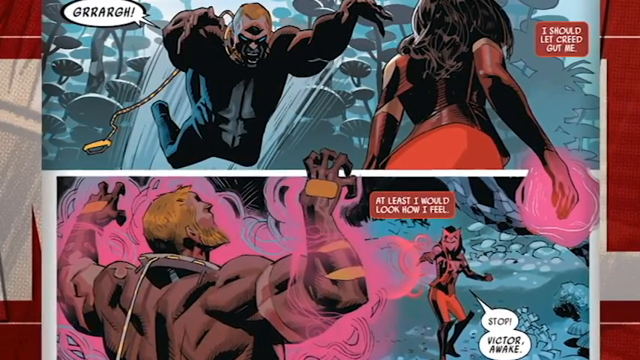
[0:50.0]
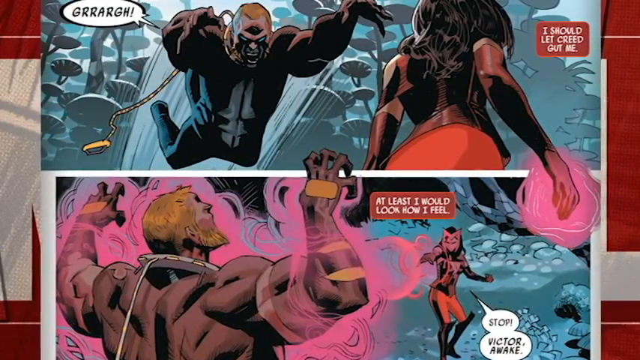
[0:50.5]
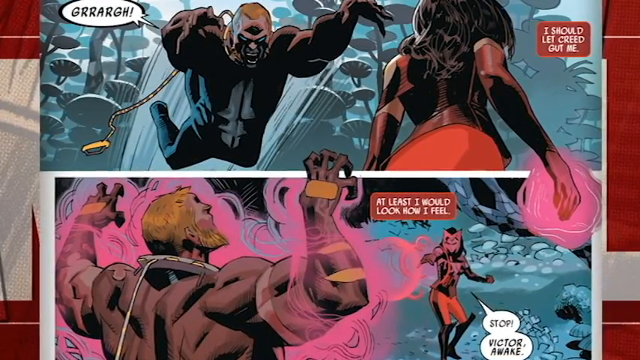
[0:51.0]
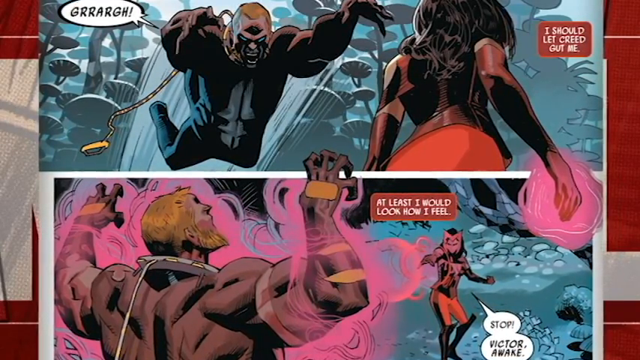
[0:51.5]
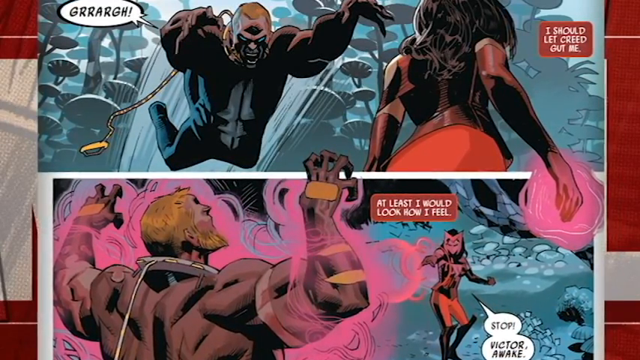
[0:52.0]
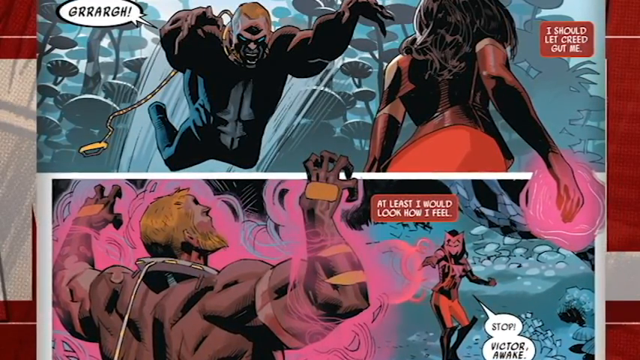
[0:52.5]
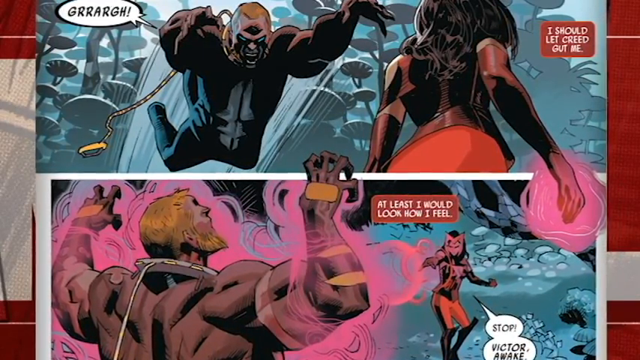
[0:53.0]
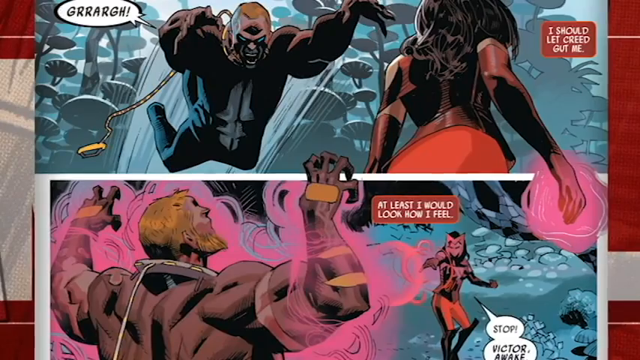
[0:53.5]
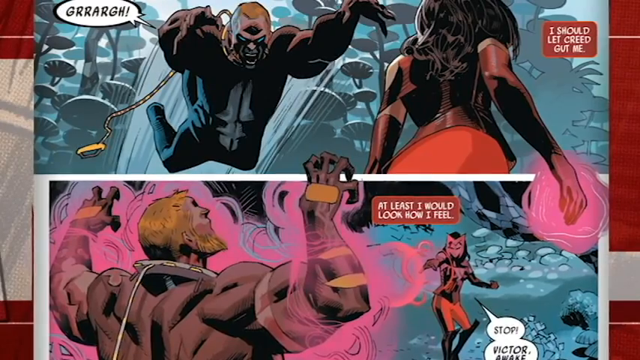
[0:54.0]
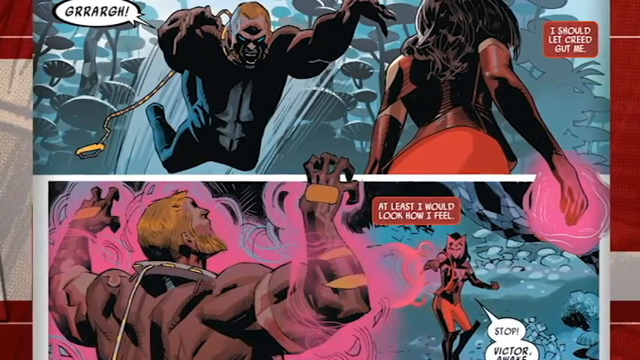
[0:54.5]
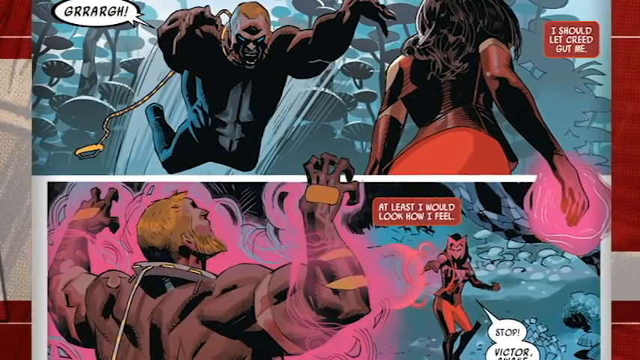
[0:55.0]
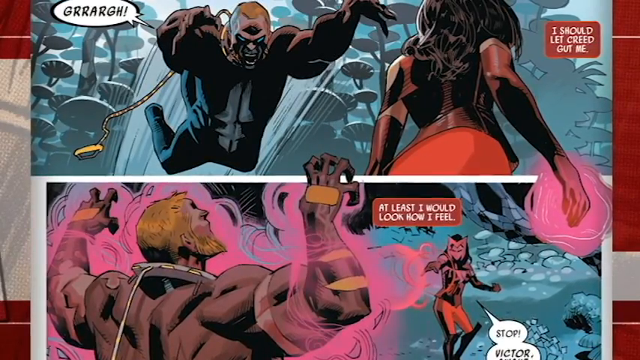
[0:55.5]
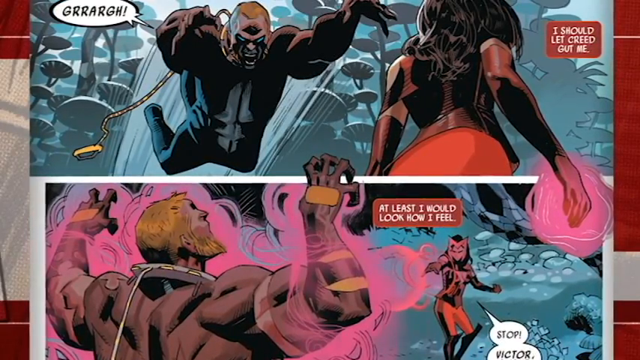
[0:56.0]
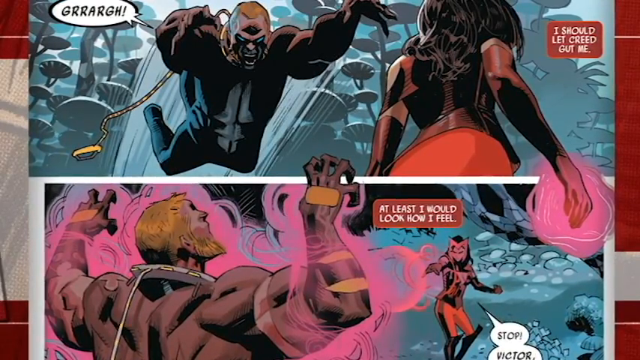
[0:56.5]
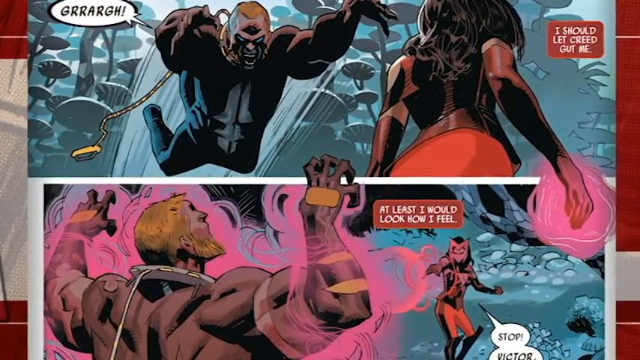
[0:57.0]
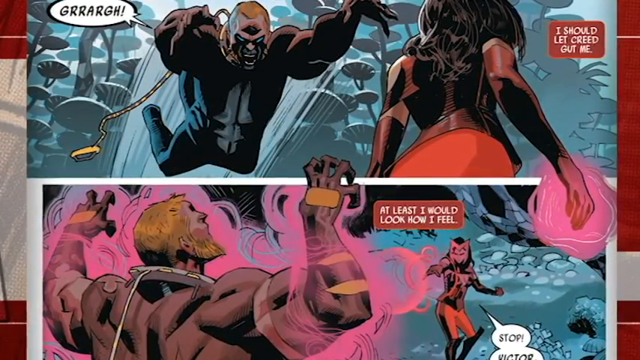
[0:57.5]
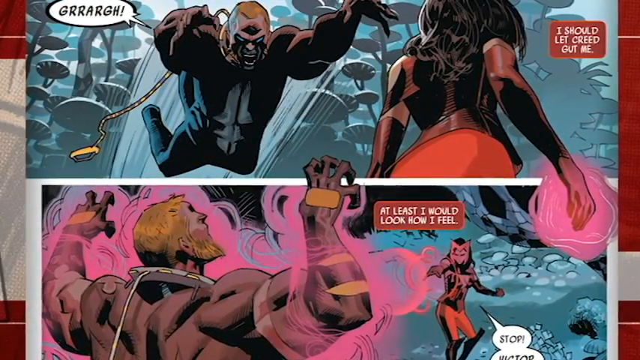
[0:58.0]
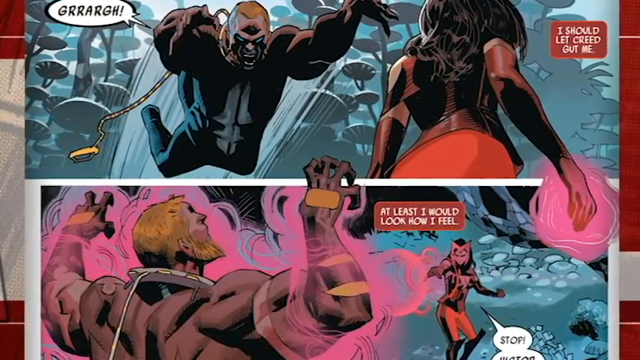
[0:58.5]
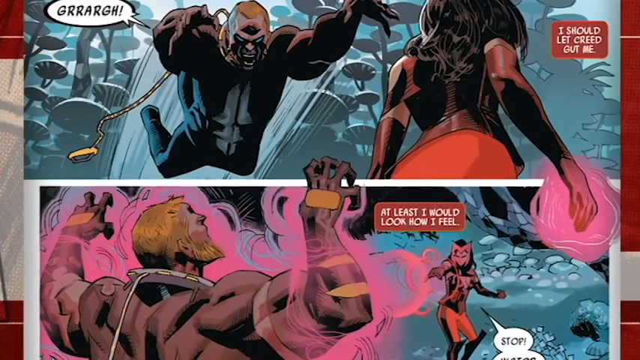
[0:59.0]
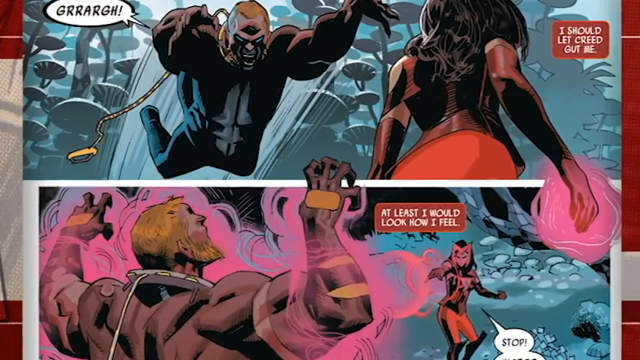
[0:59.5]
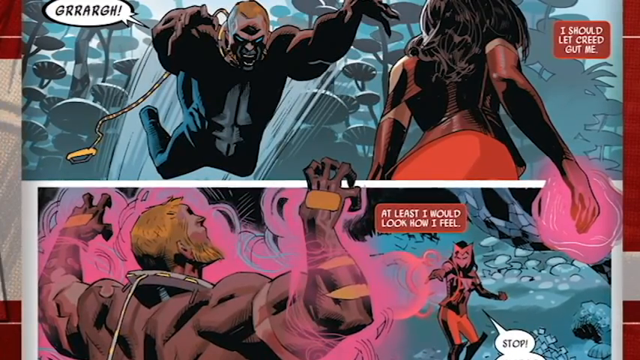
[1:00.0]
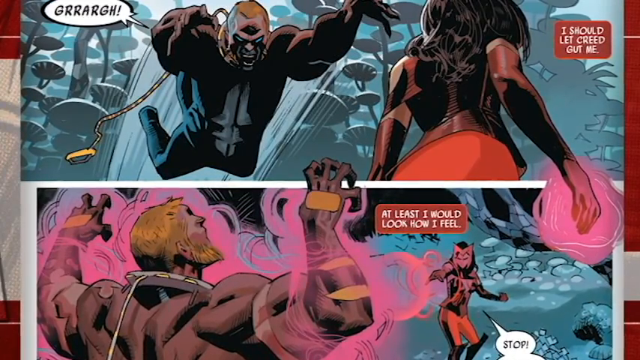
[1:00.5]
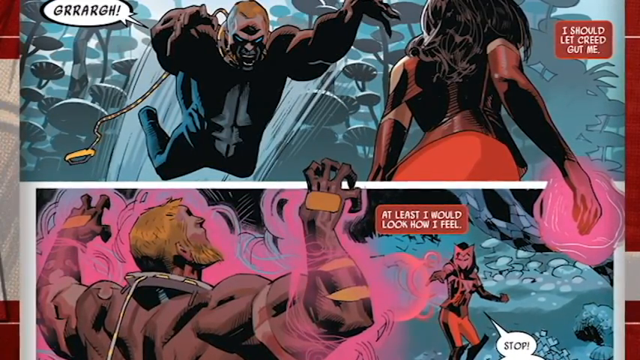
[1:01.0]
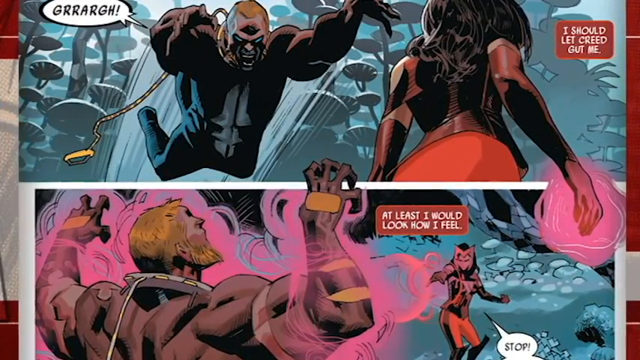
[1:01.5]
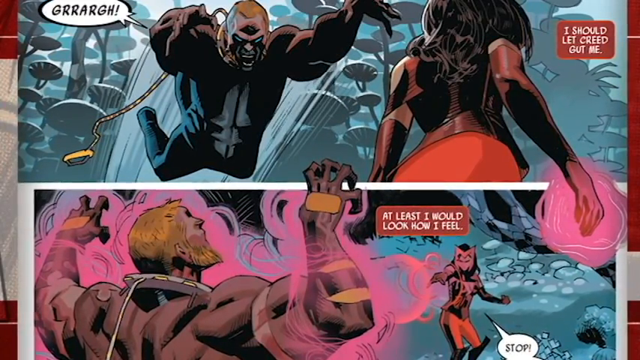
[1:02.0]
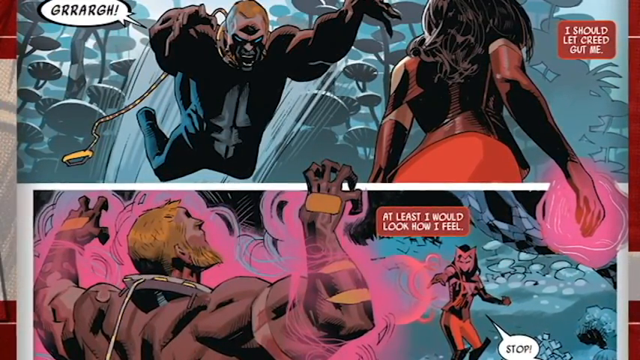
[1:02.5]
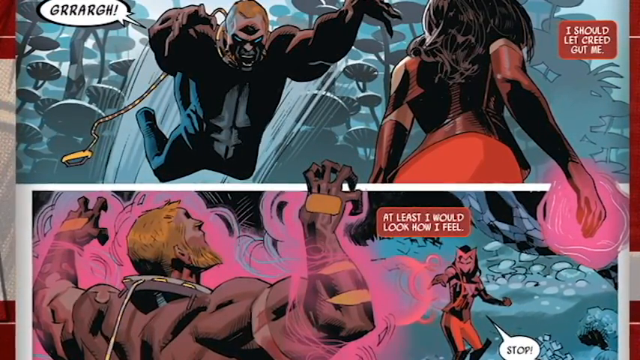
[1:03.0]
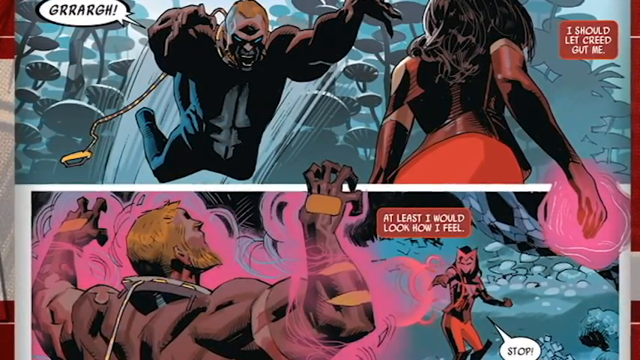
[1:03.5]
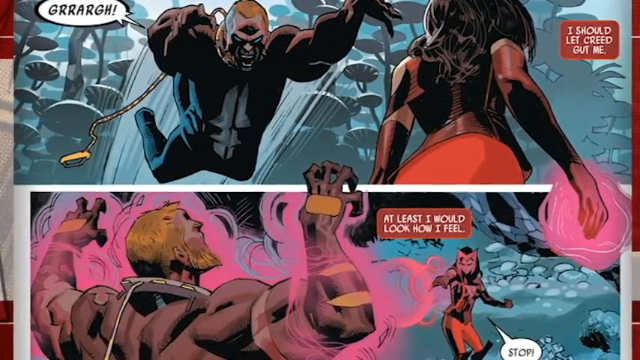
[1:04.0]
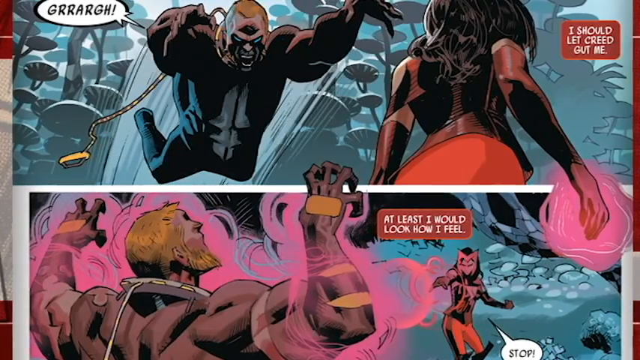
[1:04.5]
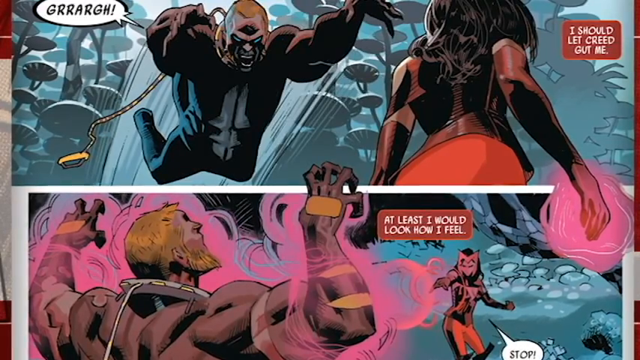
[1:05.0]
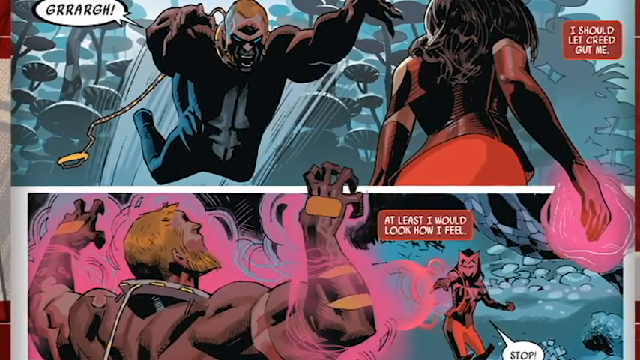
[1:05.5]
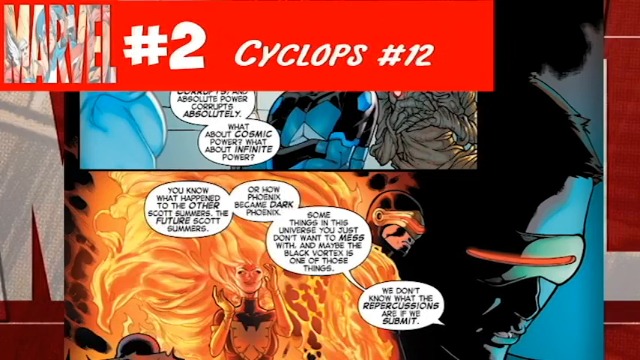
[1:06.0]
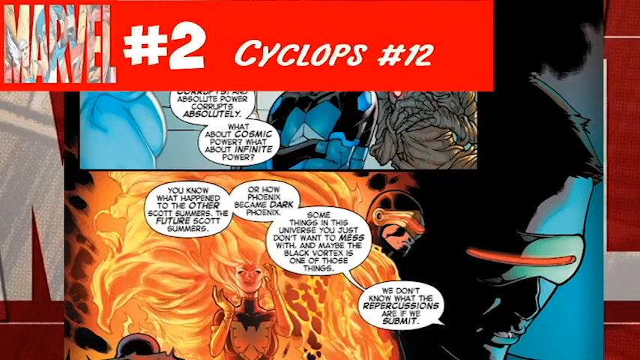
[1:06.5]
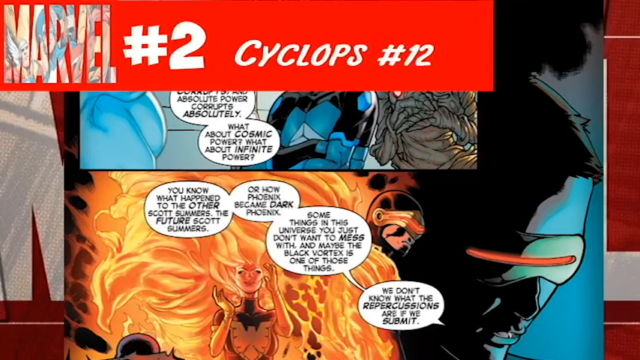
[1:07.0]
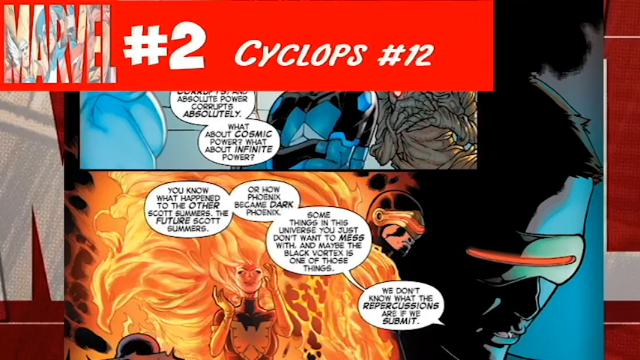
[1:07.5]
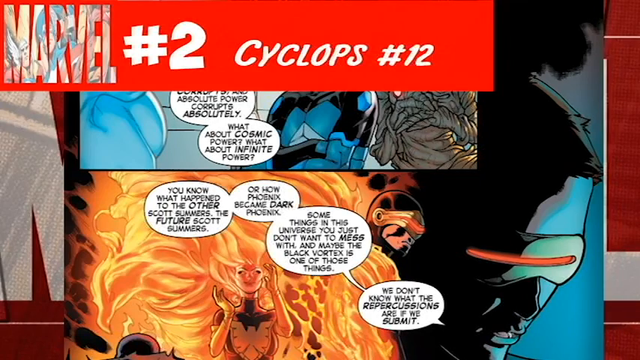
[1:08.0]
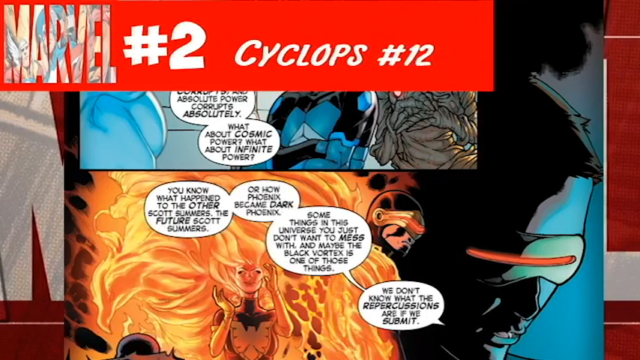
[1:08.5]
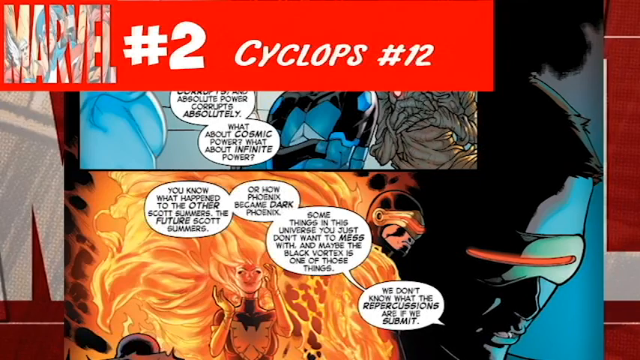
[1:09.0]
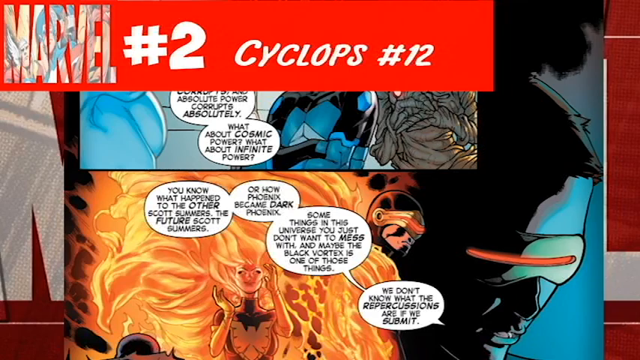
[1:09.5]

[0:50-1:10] The next banner reads "Marvel No. 3, Uncanny Avengers No. 3." This is a two-panel comic, with the panels divided horizontally rather than vertically. In the upper panel, a muscular figure with no hair on their head is jumping onto a black woman with black hair, an orange shirt and what looks like very revealing armor. She is wielding some sort of power in her hands, depicted as a pale pink aura around her hands. The video zooms in more and more, and in the next panel the man who flew at her is wrapped in her pink aura. The background seems to be some sort of mushroom land; it is not really detailed and is very blue, with outlines and some details visible but nothing clearly distinguishable. The video zooms in on nearly the whole panel.